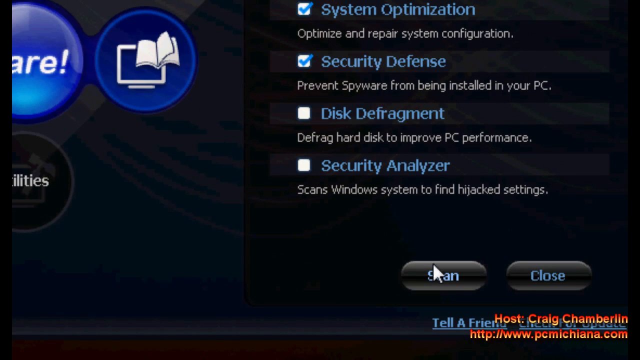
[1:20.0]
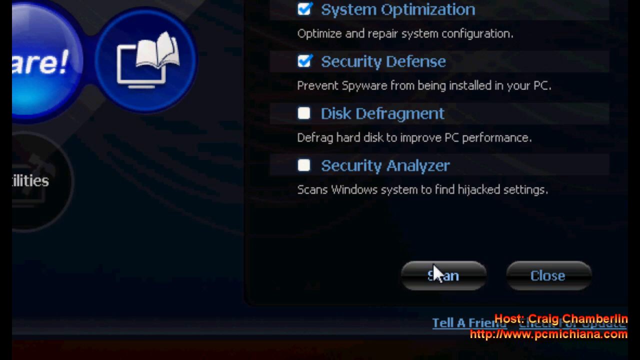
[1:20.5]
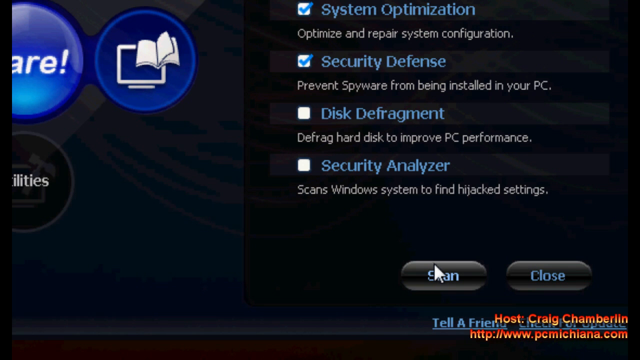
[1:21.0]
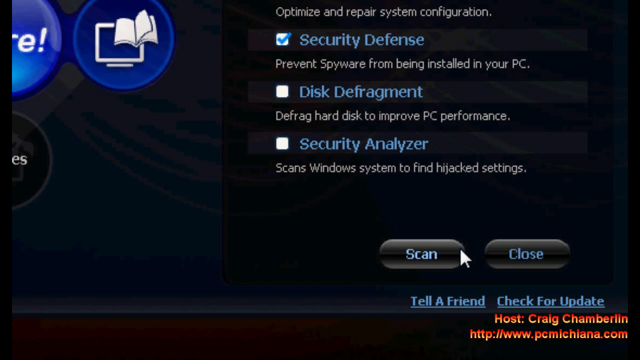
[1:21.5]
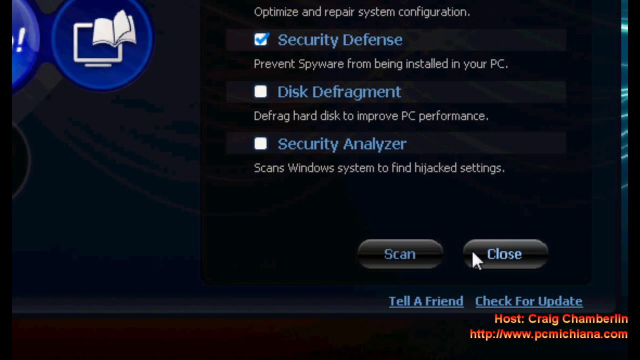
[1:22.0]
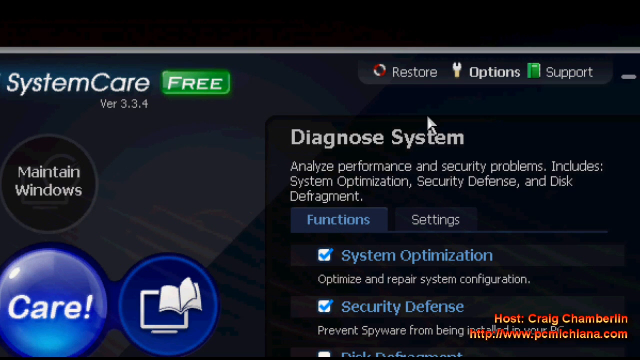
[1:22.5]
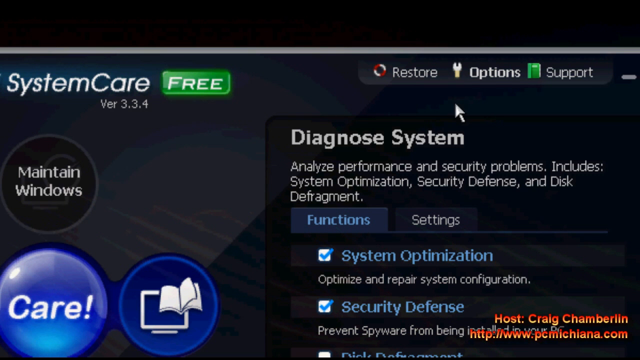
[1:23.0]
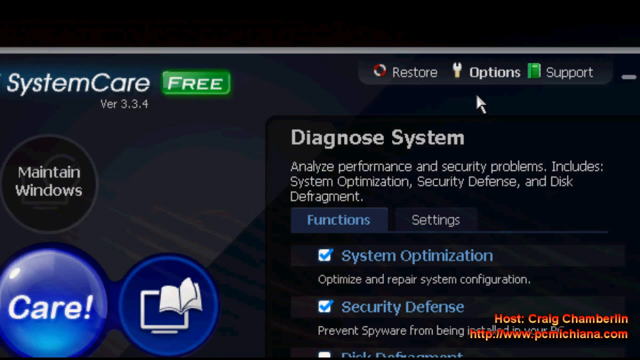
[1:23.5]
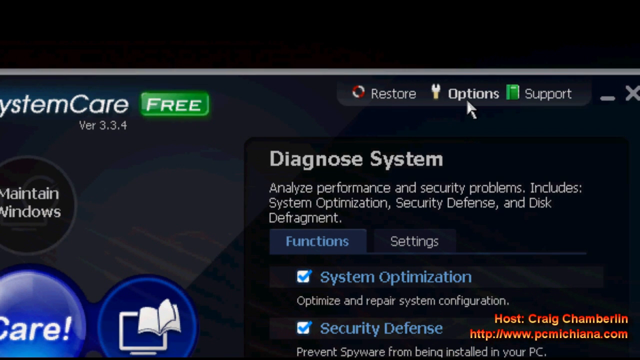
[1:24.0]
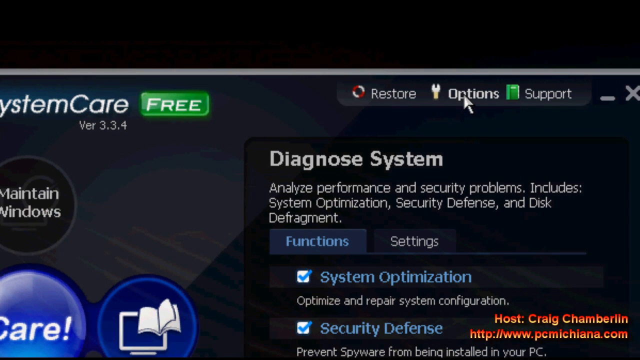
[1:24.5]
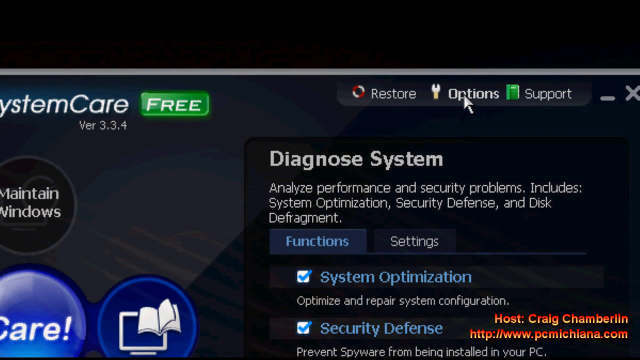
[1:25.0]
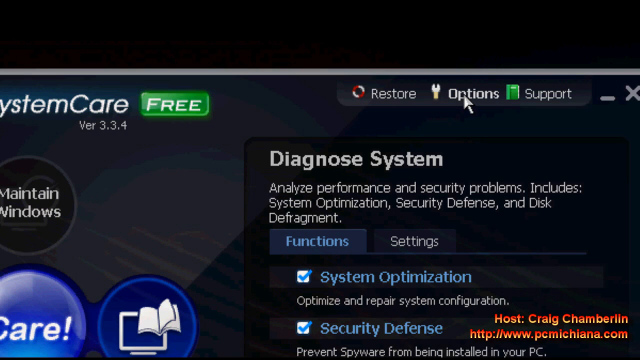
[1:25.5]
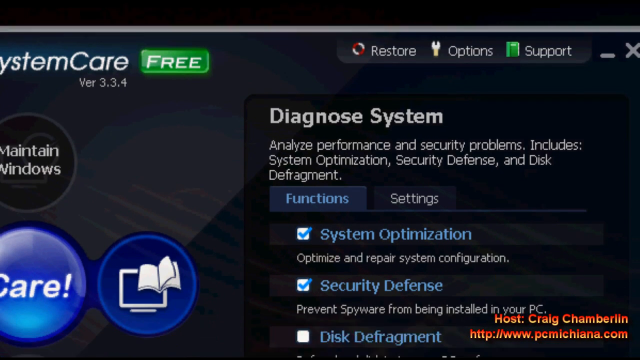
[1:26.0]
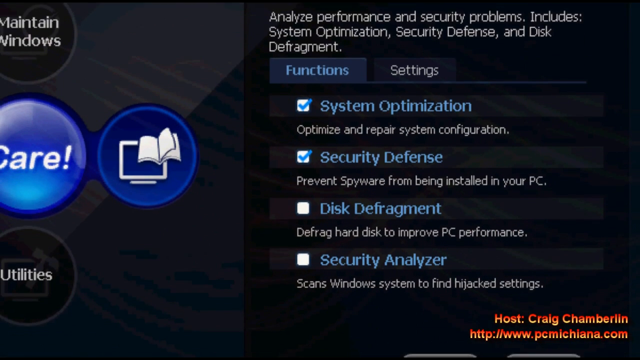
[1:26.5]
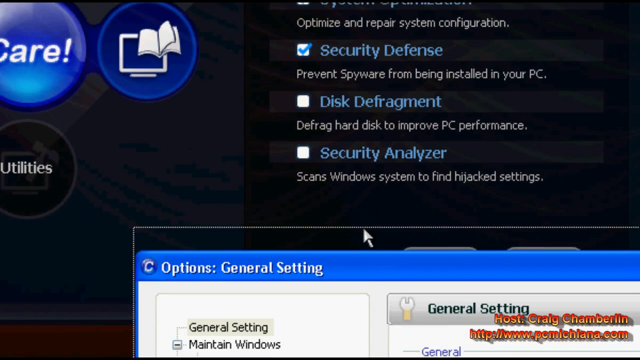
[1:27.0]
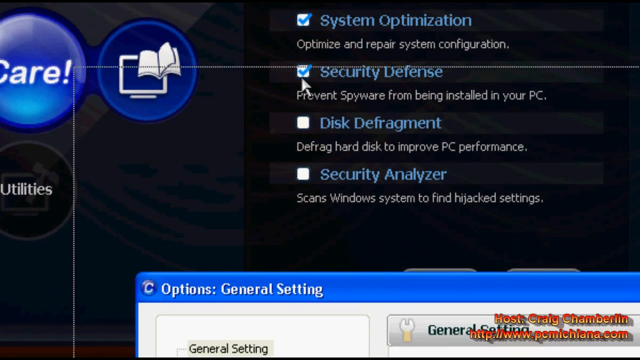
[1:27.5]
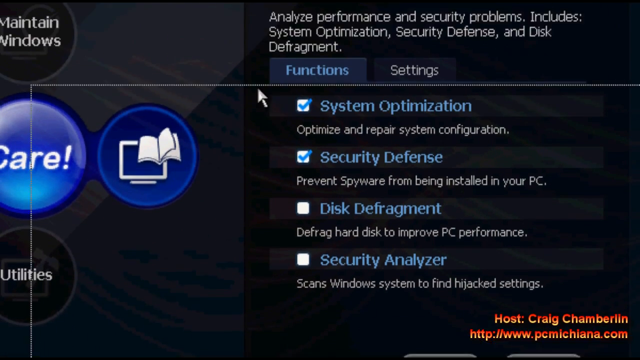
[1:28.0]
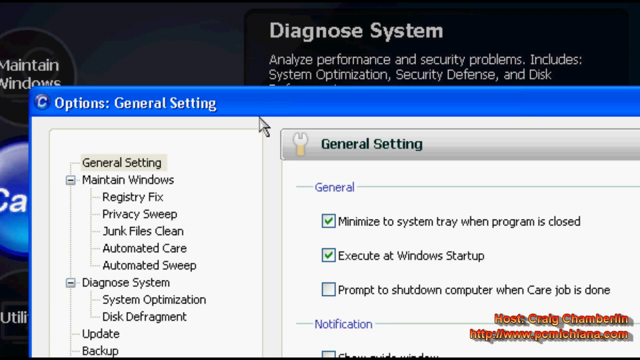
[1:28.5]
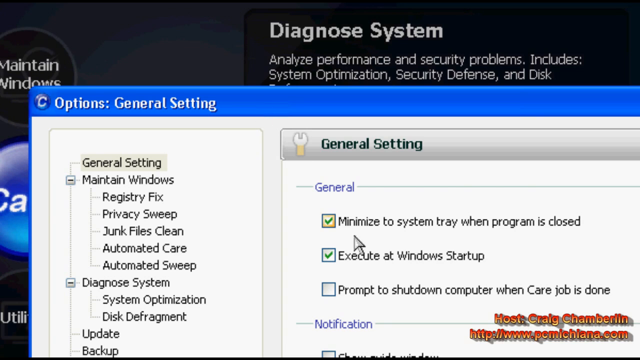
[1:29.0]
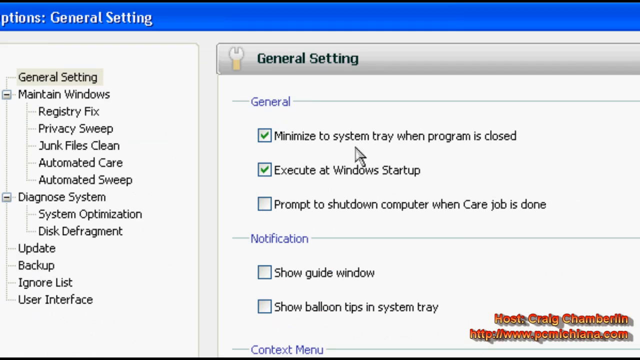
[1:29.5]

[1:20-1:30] Still on the web page, where a software update appears to be about to run, a couple of other check boxes are visible, including system organization, security defense, and security analytics. A disk defragment box remains unchecked. He closes it out and returns to the options of the diagnosis system, expands the options in a bright window, and clicks a button to minimize to the system tray when the program is closed. He ends up in the general settings section with the wrench or toolkit bar.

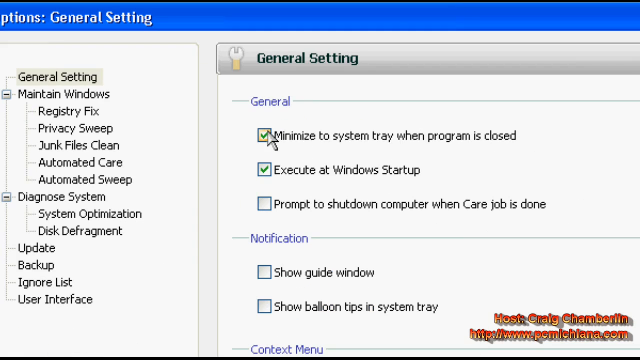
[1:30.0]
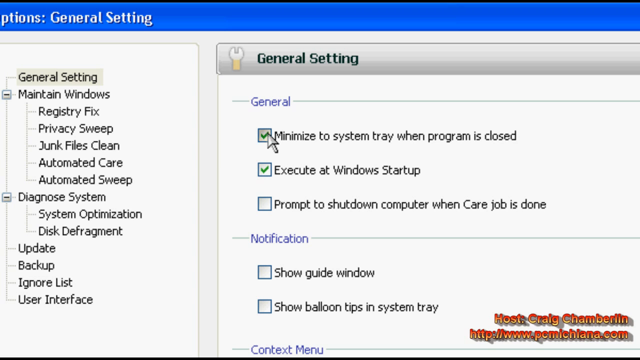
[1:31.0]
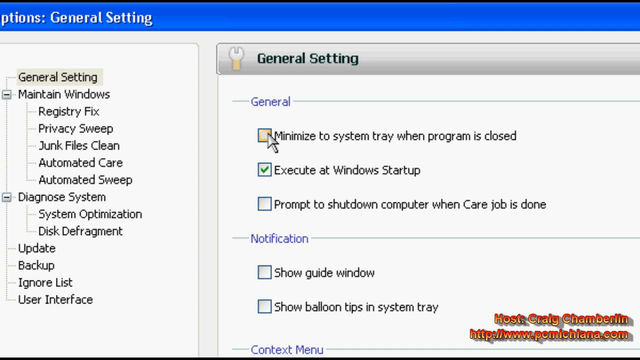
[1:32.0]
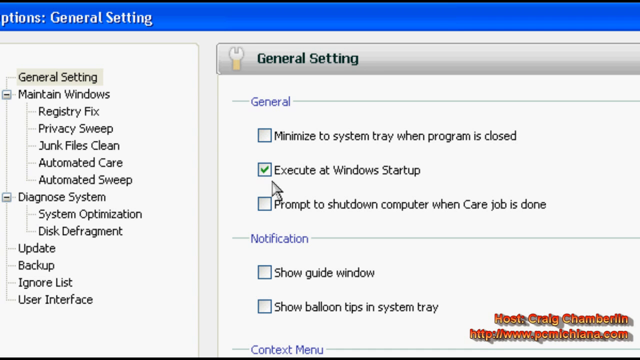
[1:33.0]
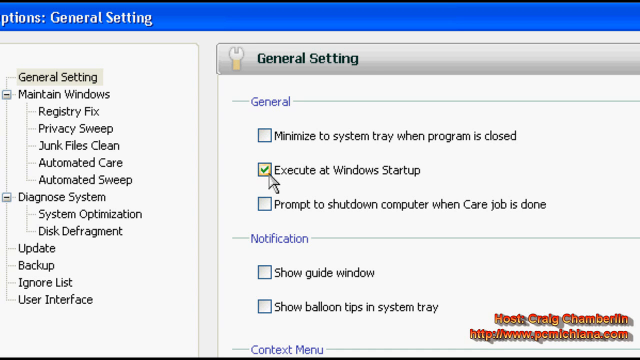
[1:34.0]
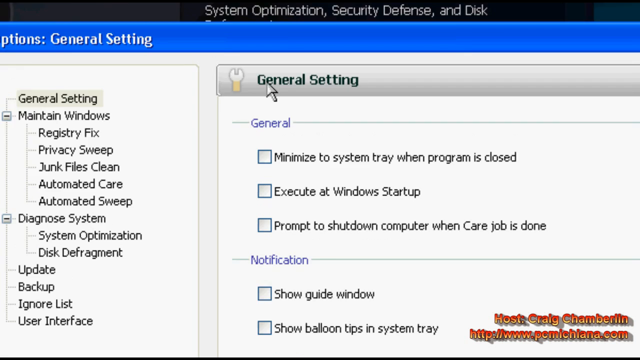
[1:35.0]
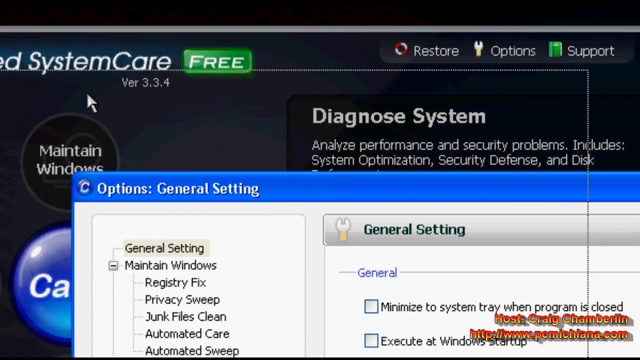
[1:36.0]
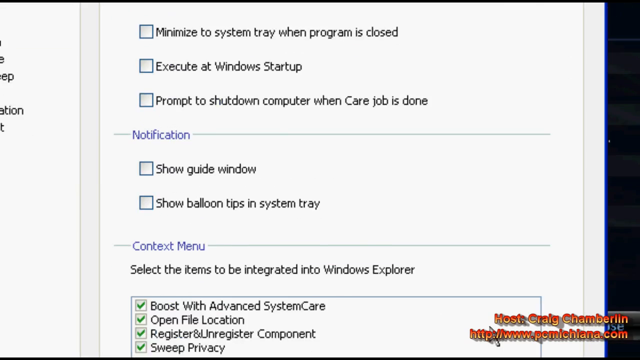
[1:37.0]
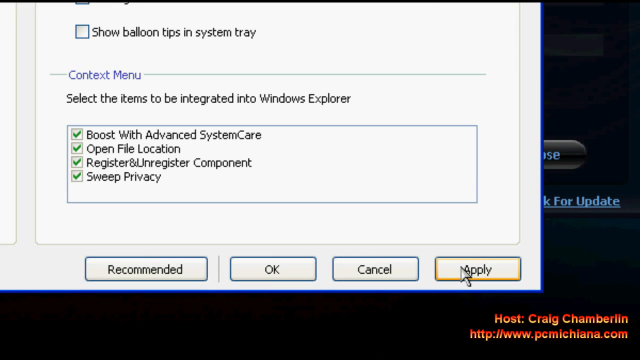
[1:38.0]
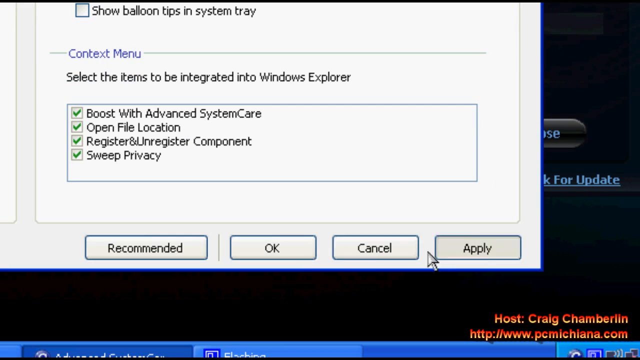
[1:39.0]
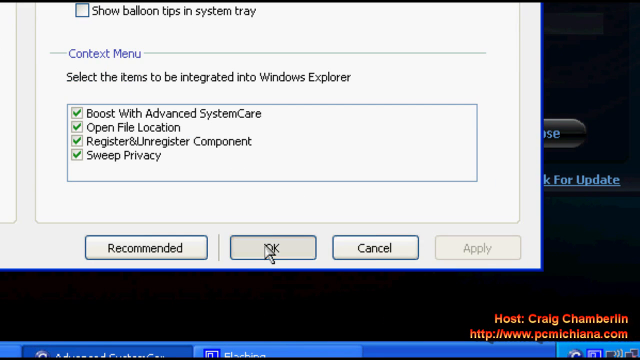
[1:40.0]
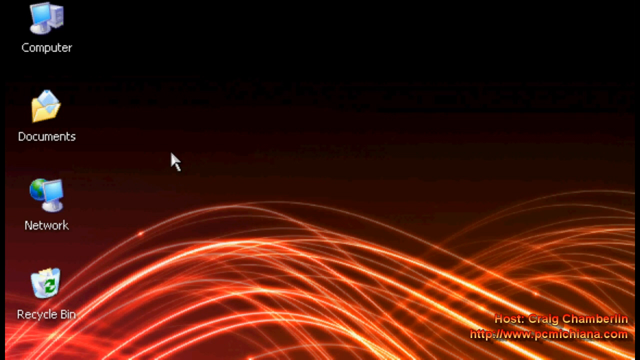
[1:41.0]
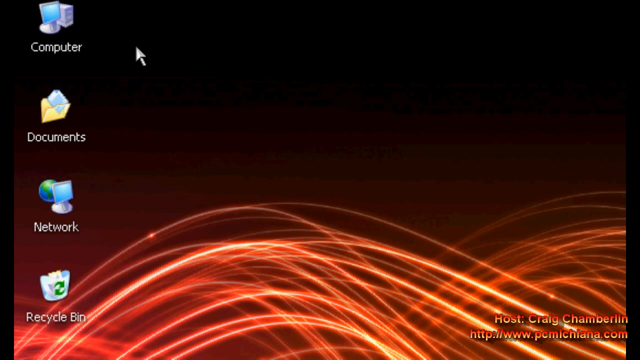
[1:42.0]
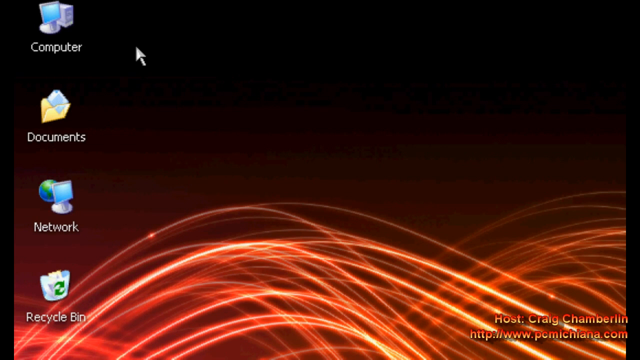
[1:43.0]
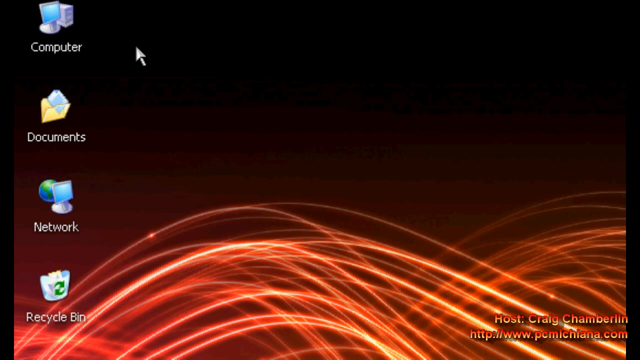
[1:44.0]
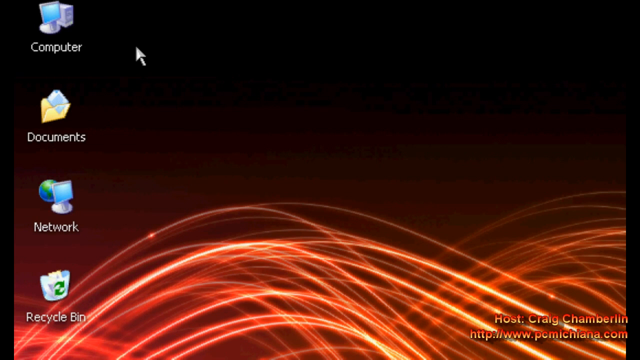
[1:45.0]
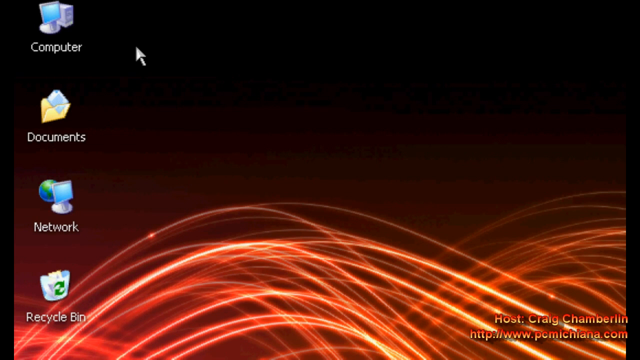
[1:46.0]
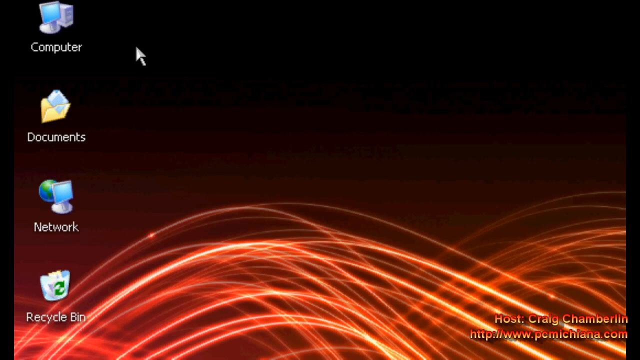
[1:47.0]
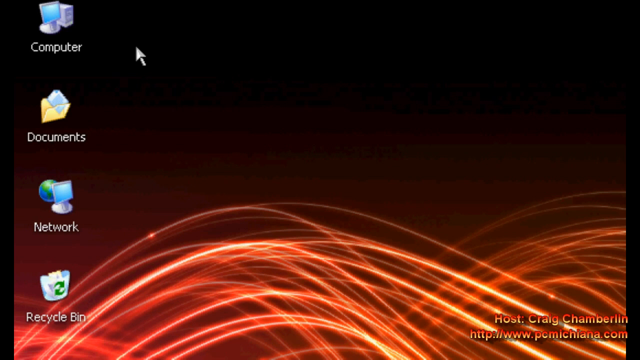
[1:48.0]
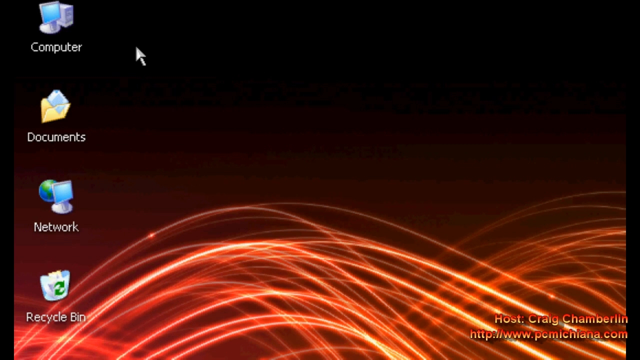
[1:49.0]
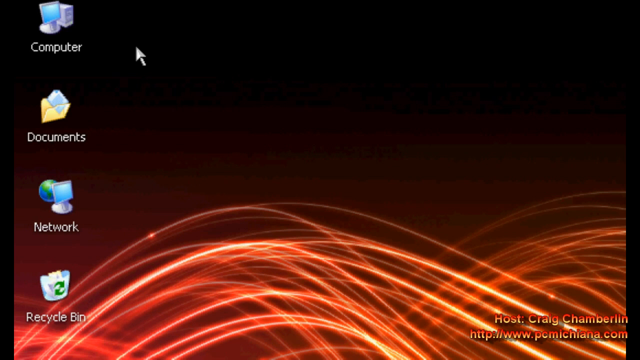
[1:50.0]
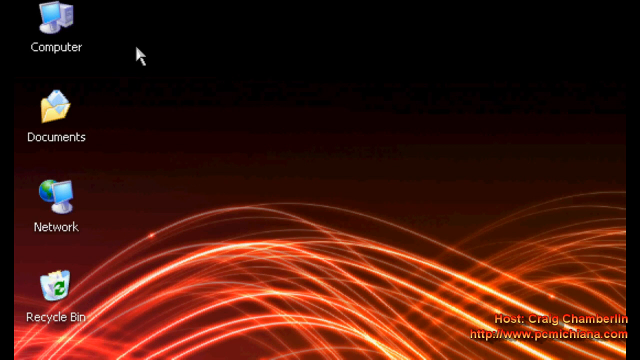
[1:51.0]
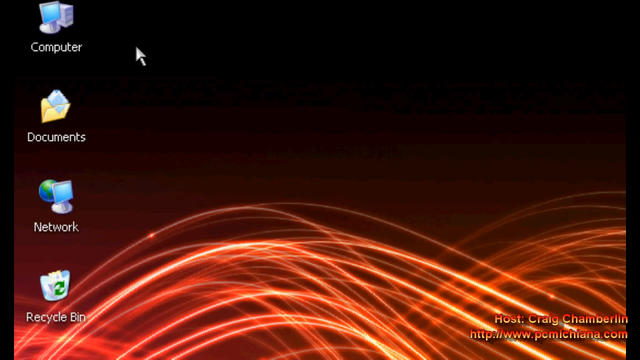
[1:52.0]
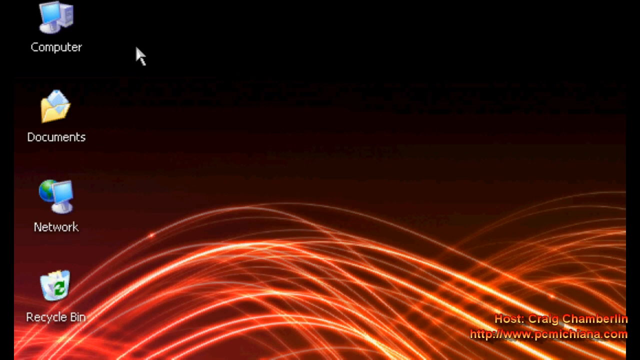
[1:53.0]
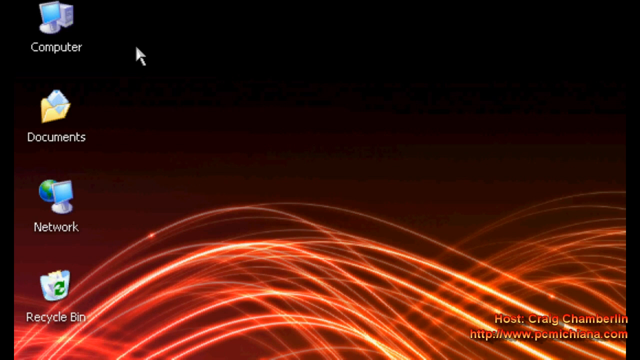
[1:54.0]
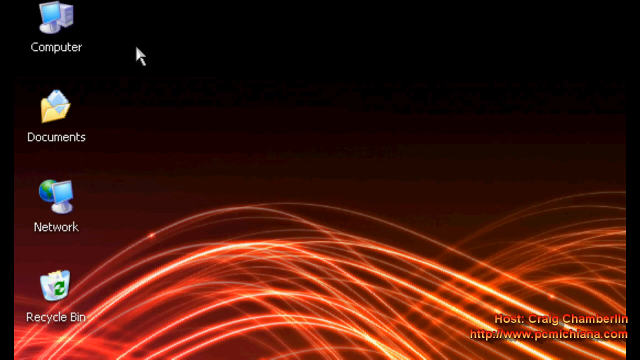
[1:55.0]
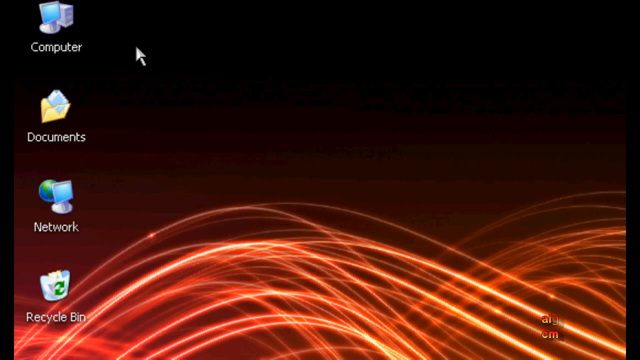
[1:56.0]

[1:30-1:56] The software update is still open, now in the General Settings tab. At the top, options appear with a blue marquee, listing maintaining Windows, a Registry Fix, Privacy Sweep, Junk Files Clean, Automated Care, and an Automated Sweep, and the Diagnosis System is set to run a System Optimization and a Disk Defragment. A couple of boxes are checked, marked by green checkmarks in blue boxes, including one that reads "Minimize to System Tray when the program is closed." Below, blue text reads "Notification" with two boxes, "Show the Guide Window" and, further down, "Show Window Tips in the System Tray." He moves the cursor along, checking and rechecking boxes, zooms out, and hits the Apply button, and the view returns to a blank screen.